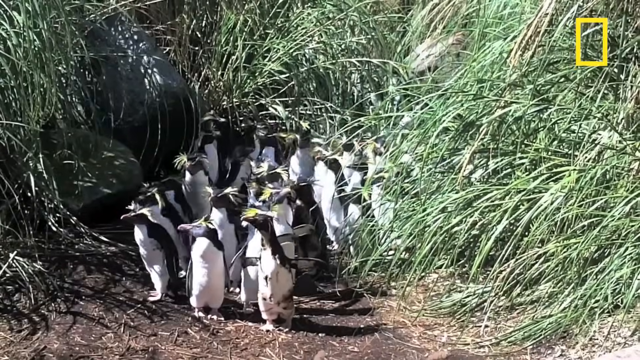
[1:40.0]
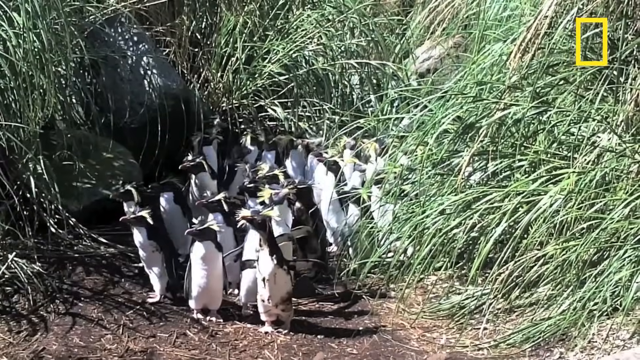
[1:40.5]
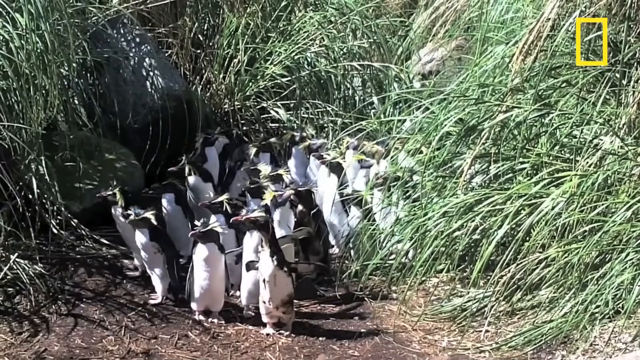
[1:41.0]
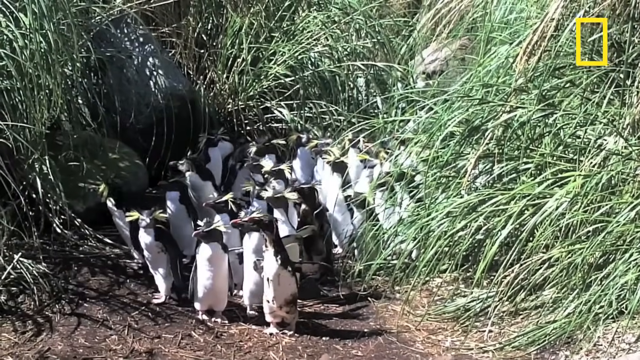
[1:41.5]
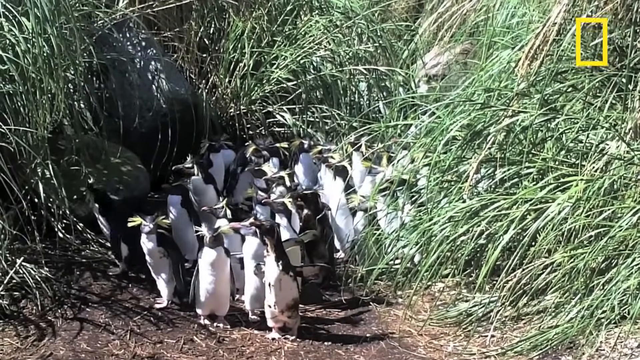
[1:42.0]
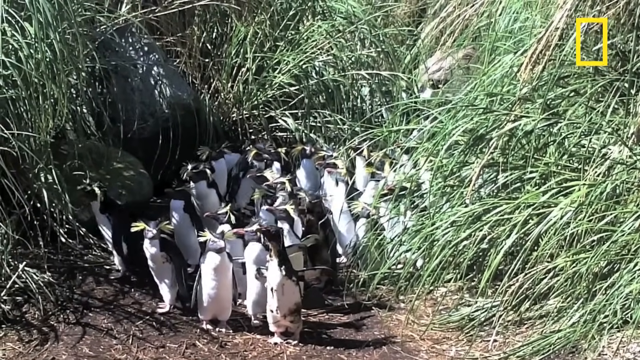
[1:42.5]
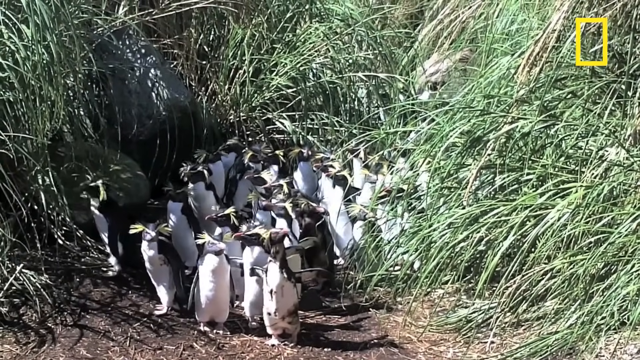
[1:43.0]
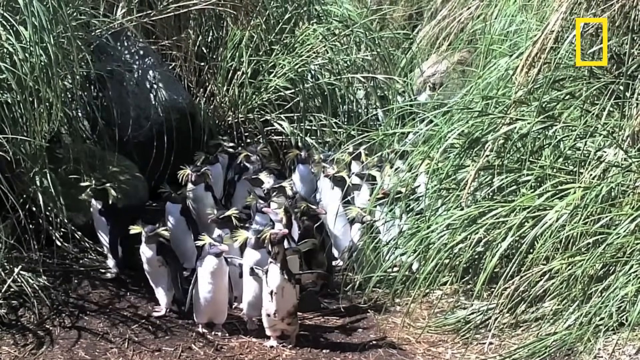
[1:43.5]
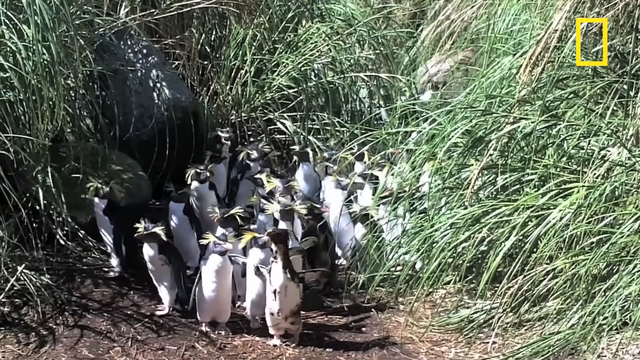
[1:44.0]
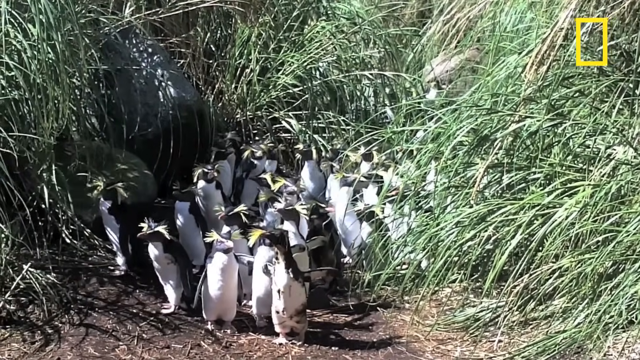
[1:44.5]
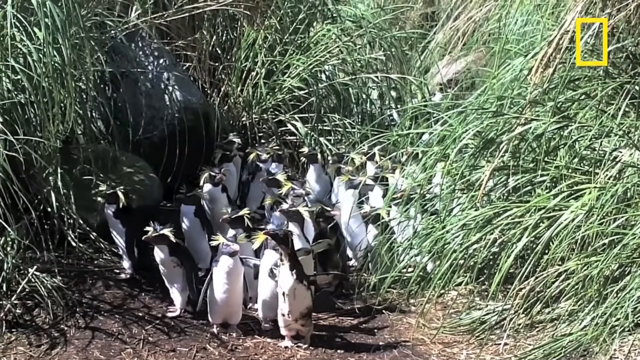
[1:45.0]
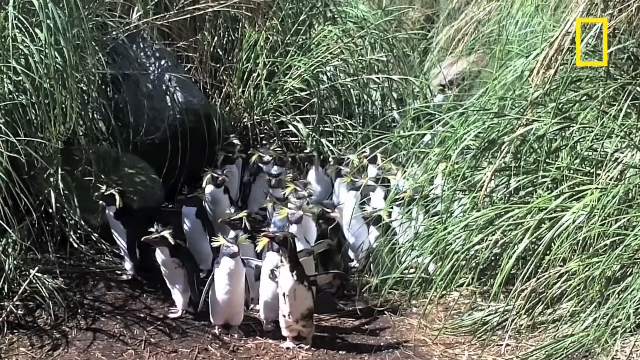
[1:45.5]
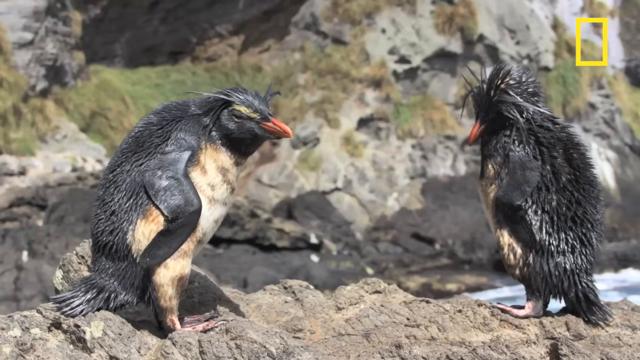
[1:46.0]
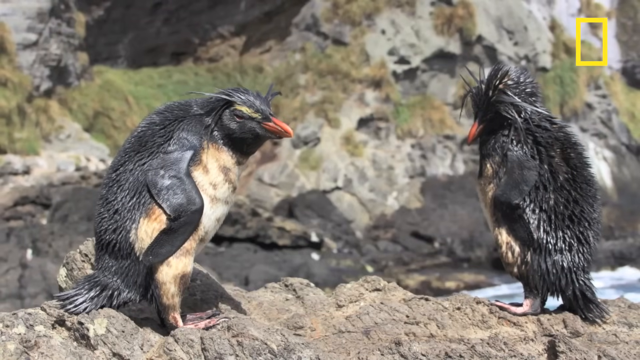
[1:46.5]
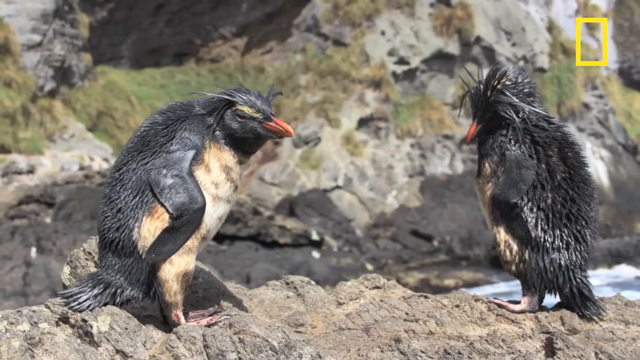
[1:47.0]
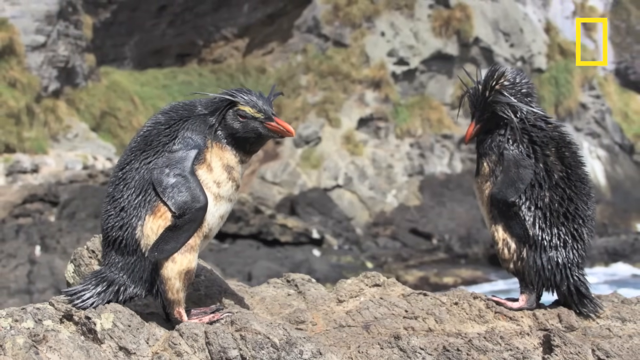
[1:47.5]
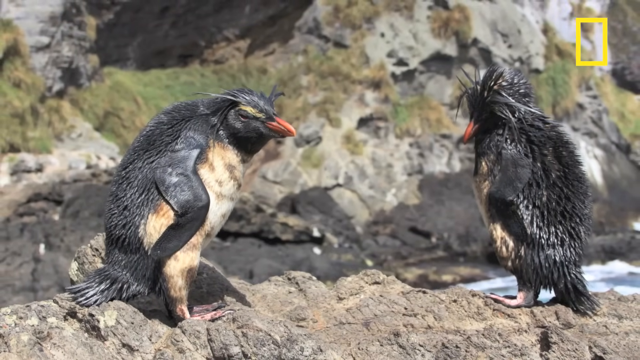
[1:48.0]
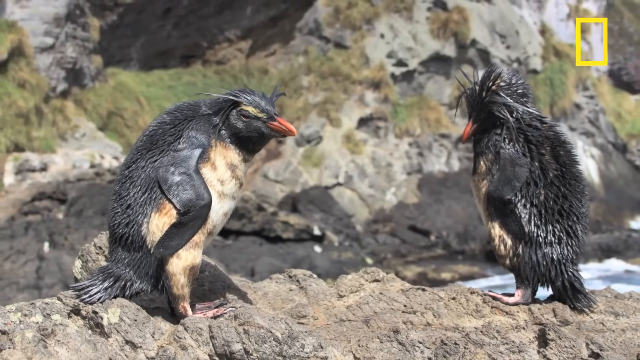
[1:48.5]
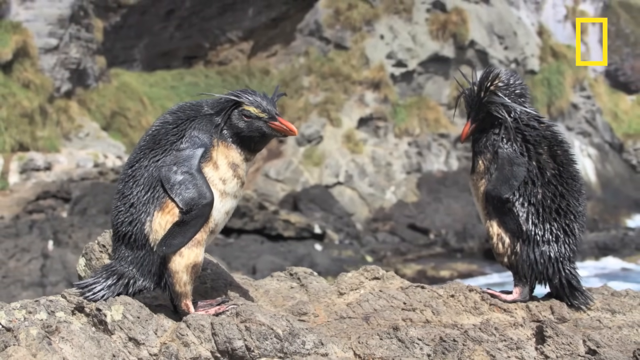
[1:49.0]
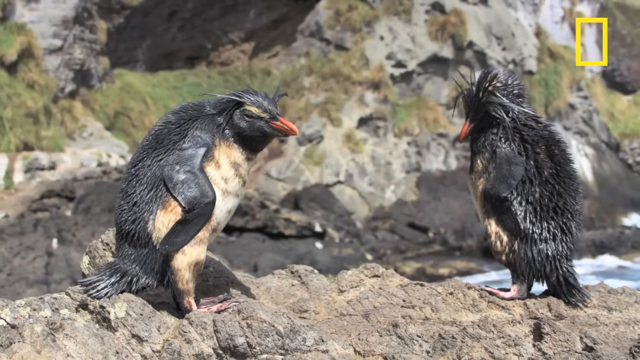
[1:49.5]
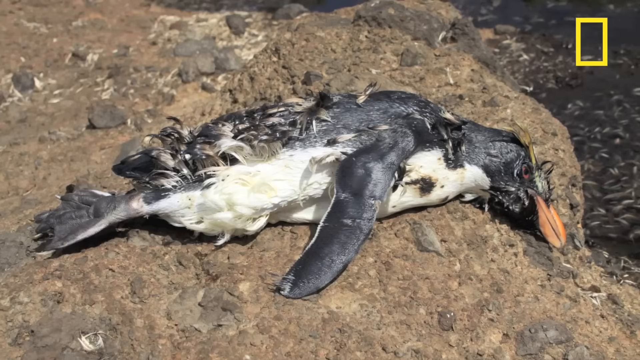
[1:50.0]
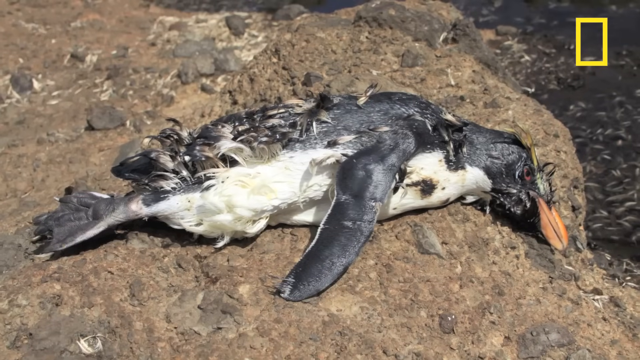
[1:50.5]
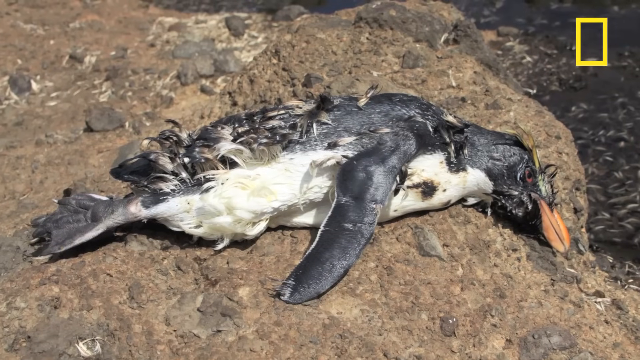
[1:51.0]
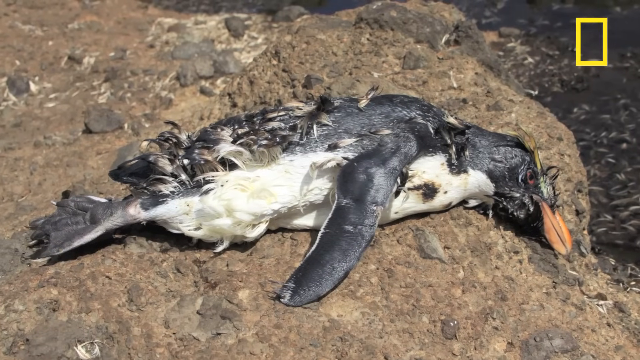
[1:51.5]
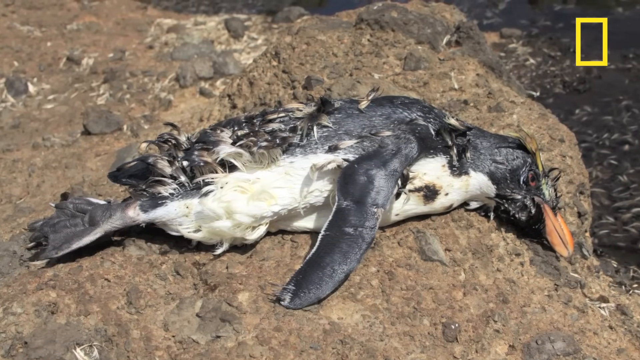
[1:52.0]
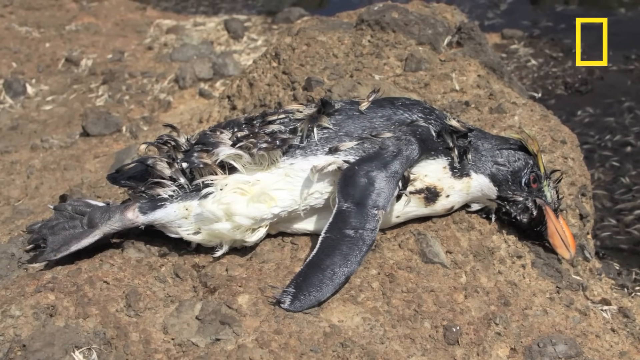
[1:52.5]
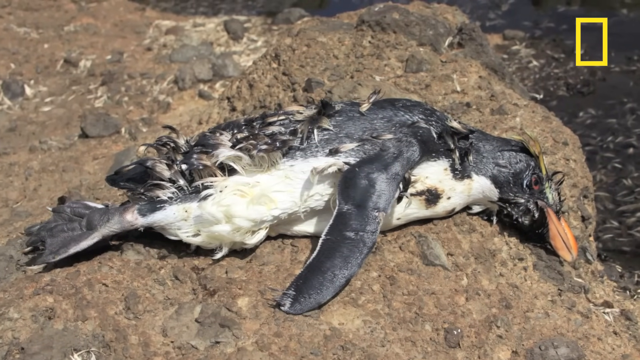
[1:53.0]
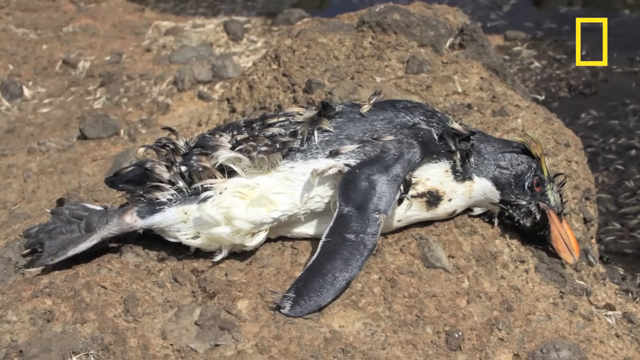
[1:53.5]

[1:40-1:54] The 20 or so penguins that came out of the grassy area are kind of standing there together, looking cleaner. Then pictures appear of penguins that look like they are in distress. One looks dead, lying on the ground, kind of all chewed up, and some still look slick, maybe from an oil spill. The penguins are all around each other. This area is less rocky and more kind of dirt, with what looks like long green grass or bushes, looking like reeds or long pieces of grass, where the penguins came out.